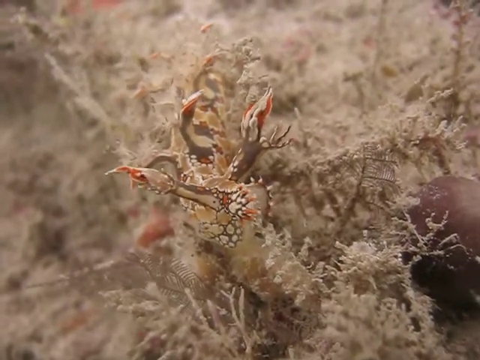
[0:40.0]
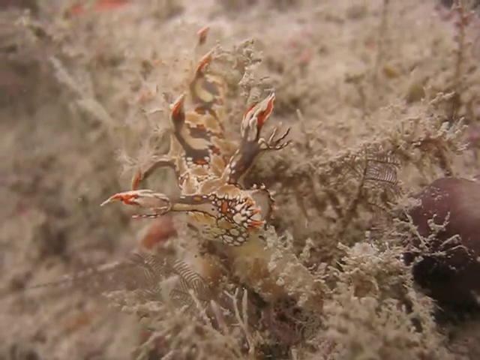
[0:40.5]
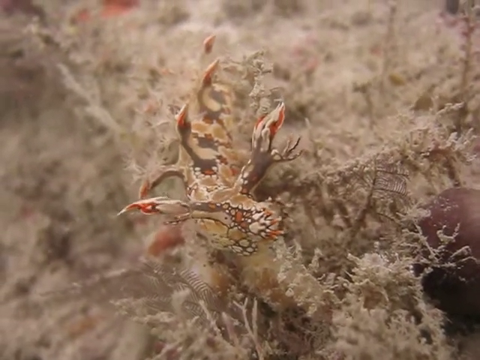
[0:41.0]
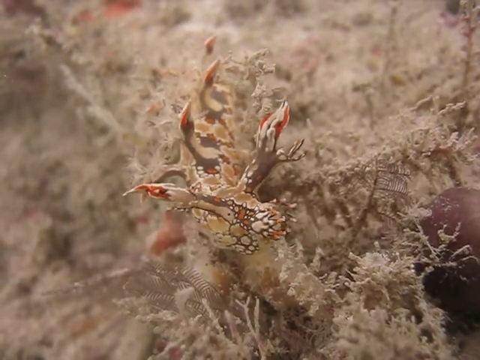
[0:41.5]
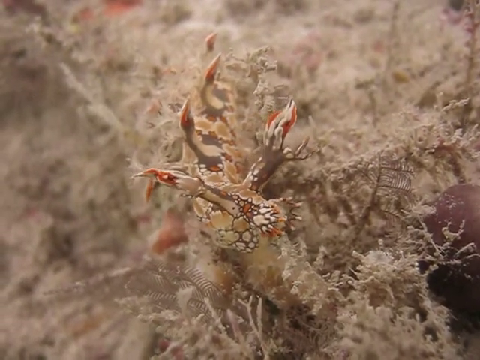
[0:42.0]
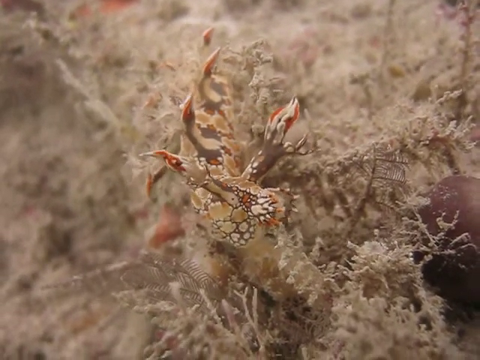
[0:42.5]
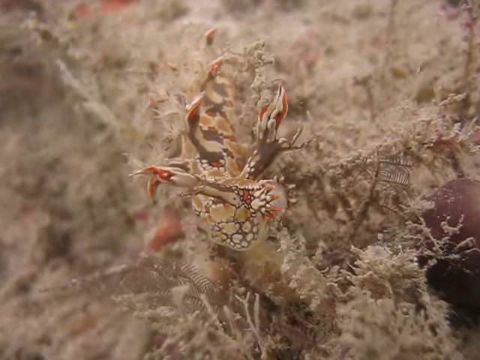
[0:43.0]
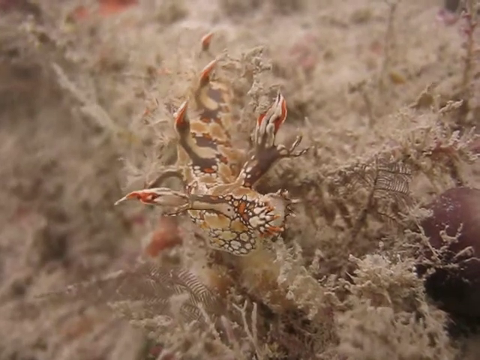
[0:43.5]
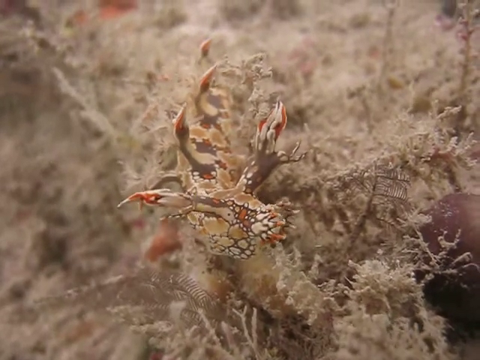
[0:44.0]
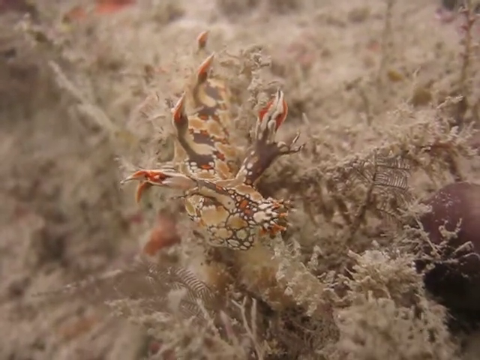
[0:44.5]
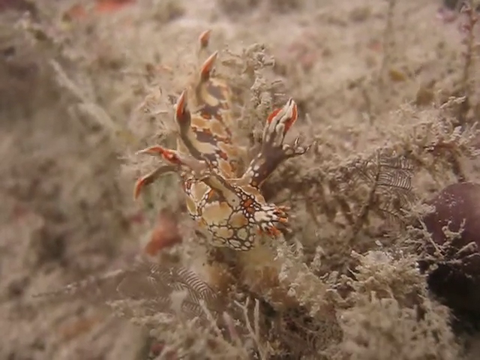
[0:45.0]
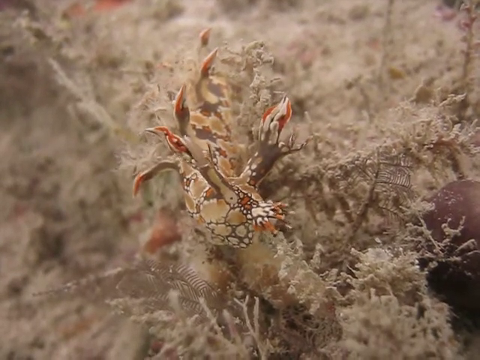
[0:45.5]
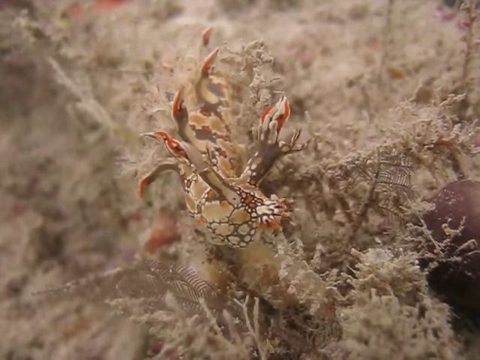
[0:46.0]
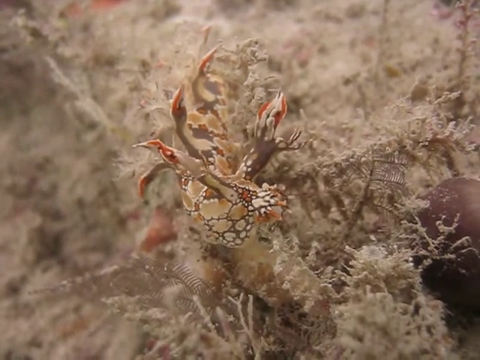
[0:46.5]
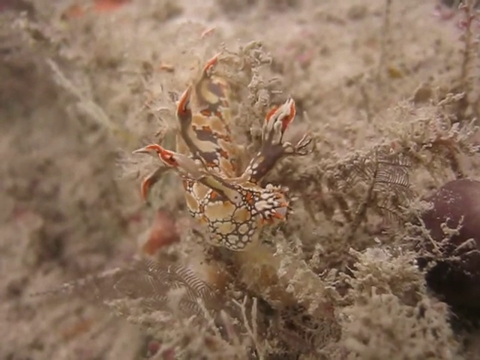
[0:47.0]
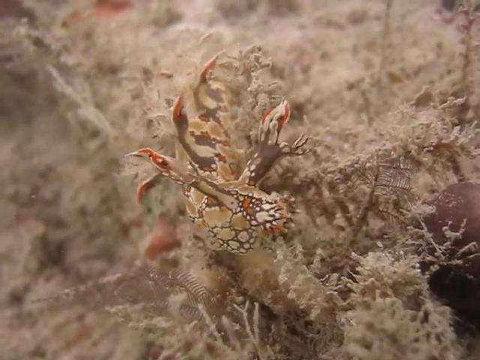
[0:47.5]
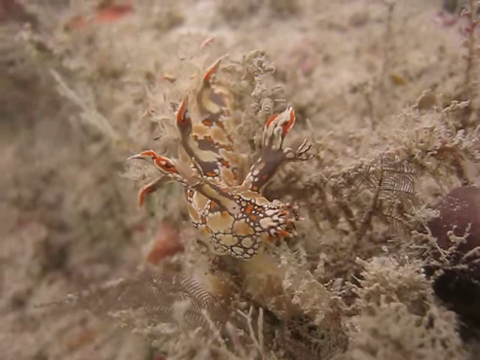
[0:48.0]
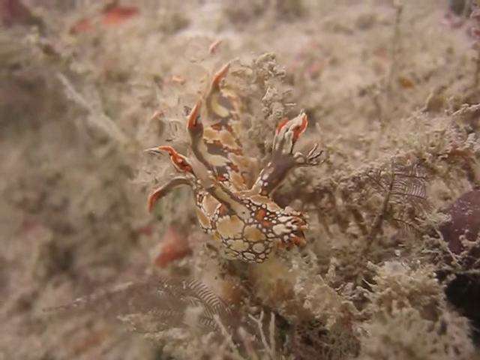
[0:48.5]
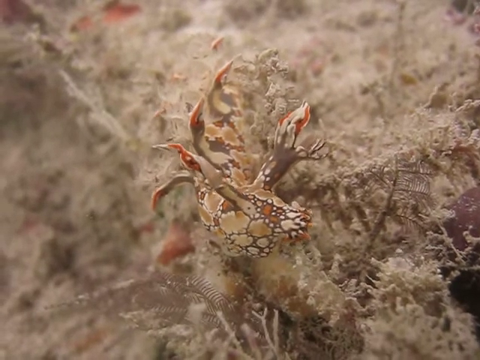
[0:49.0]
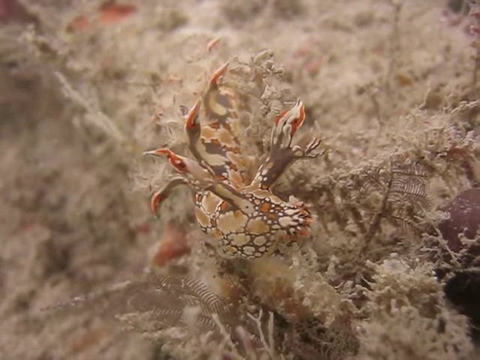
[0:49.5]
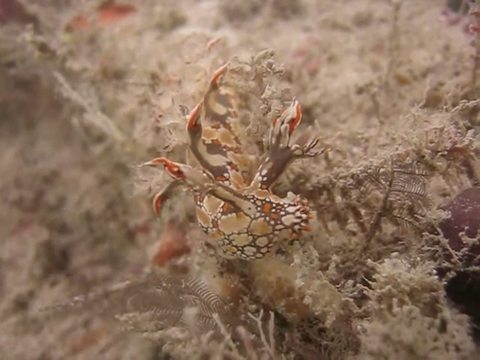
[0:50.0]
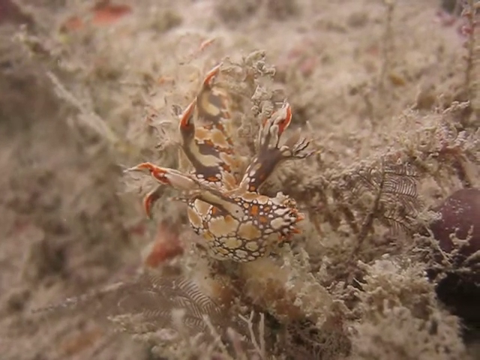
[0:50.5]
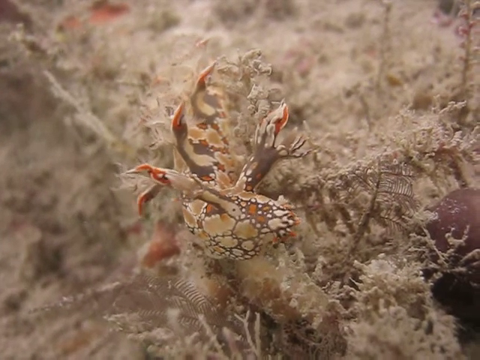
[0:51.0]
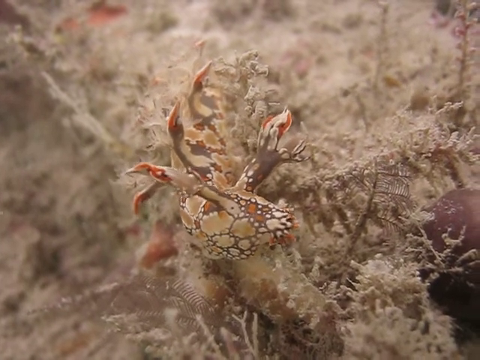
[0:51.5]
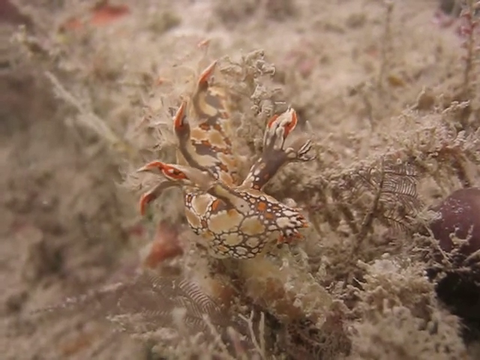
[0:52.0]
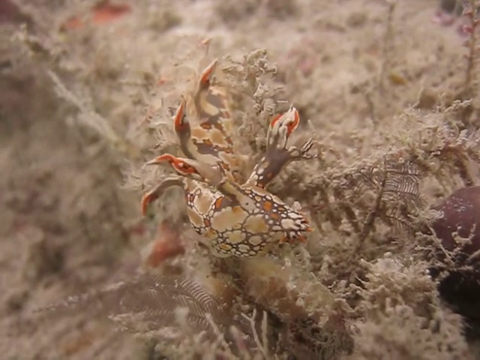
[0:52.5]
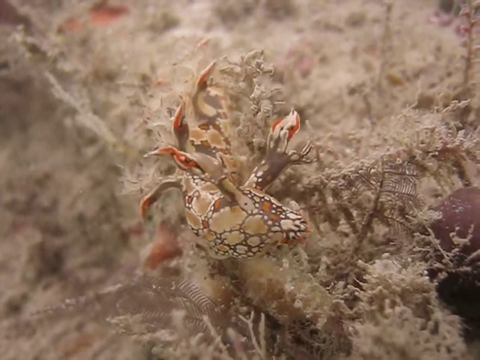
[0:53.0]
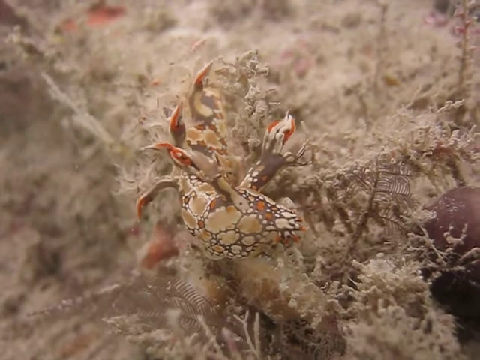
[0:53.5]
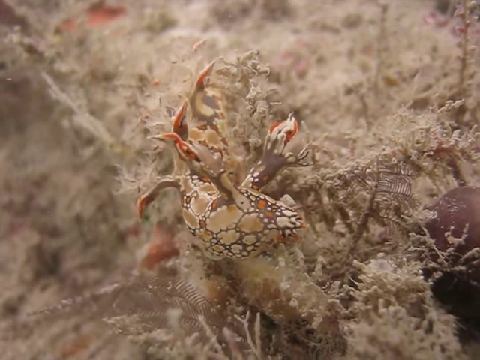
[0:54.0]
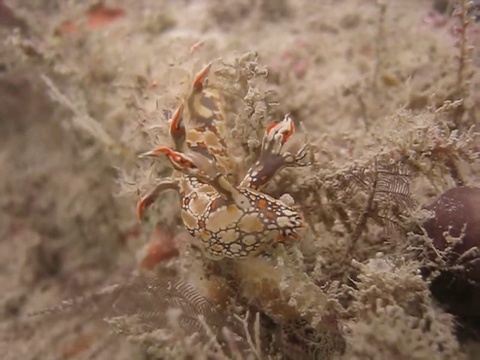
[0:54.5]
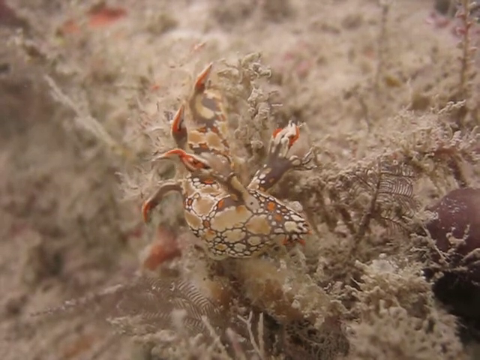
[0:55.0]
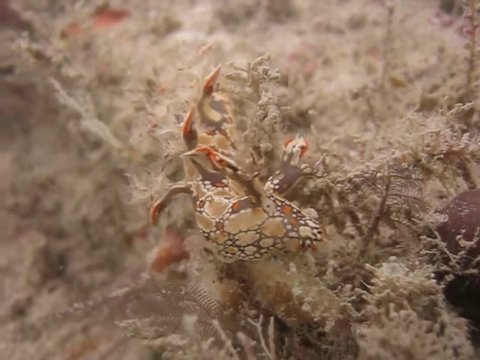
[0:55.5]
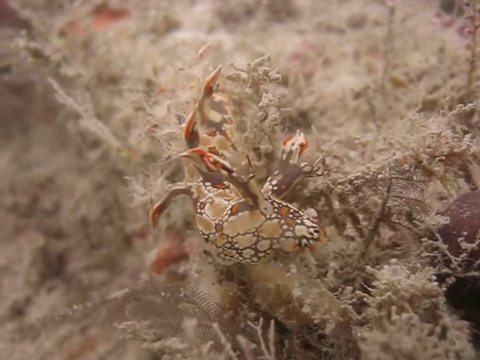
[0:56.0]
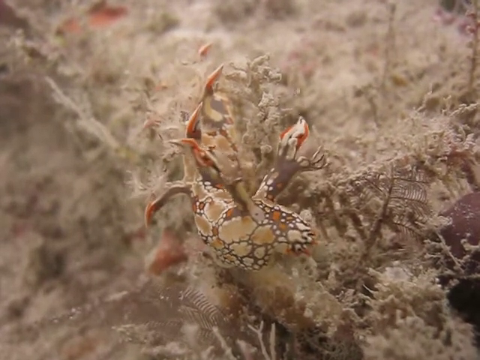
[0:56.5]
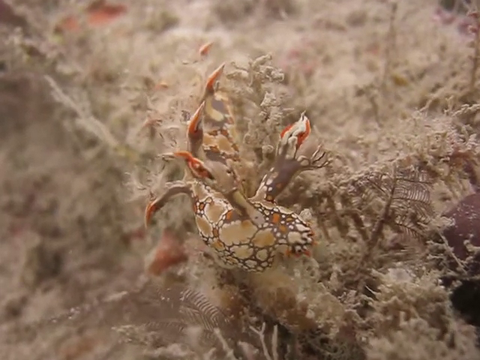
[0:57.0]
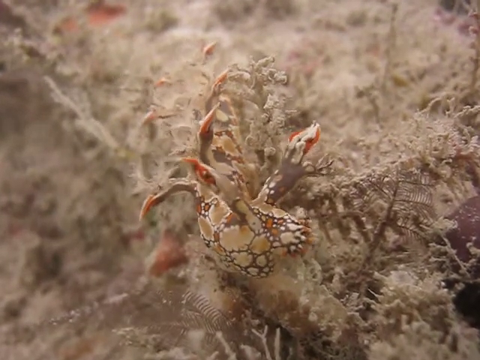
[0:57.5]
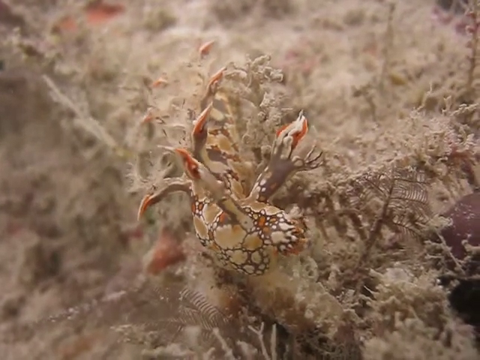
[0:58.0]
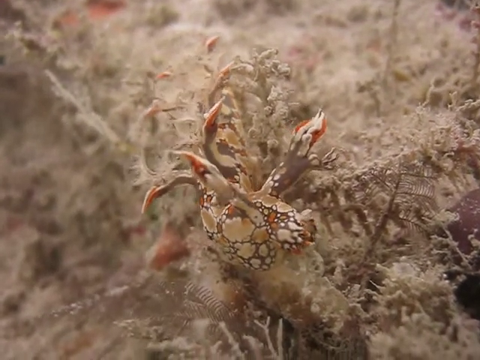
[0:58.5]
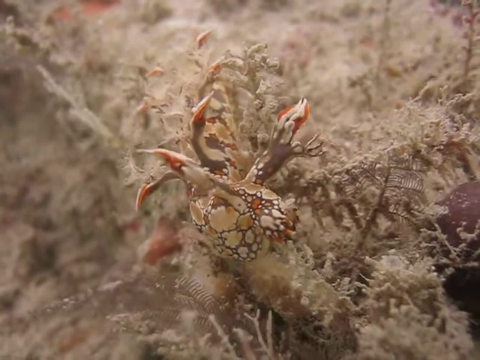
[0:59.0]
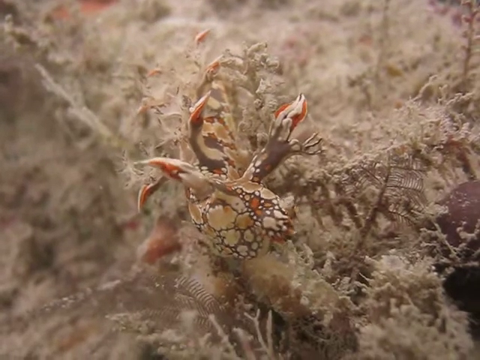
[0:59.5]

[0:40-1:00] A solitary ocean creature is on an area of either coral or sponge at the bottom of the ocean; it is difficult to tell exactly what the material is. A large rock is to the right. The creature is sort of beige with areas of brown, orange, and gray, and appears to have sort of claw-like features as part of its body. It stays in one place except for light movements with the ocean current, and seems to be sort of attached to the coral or sponge, barely moving with the water around it. No other ocean creatures are visible.